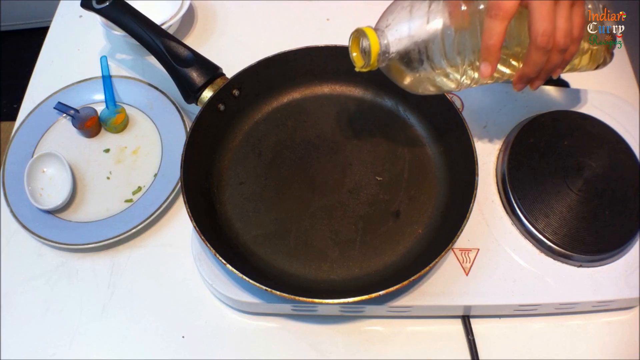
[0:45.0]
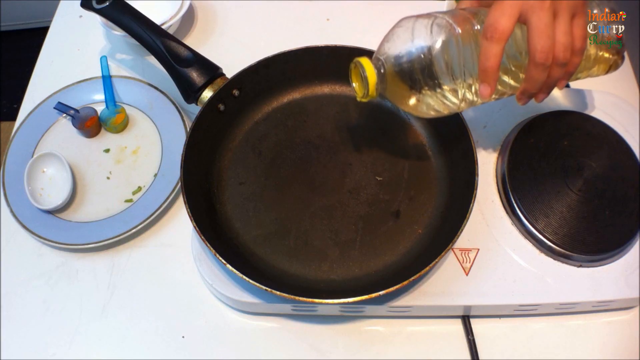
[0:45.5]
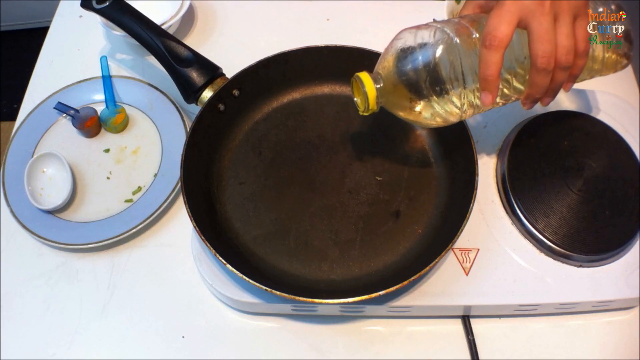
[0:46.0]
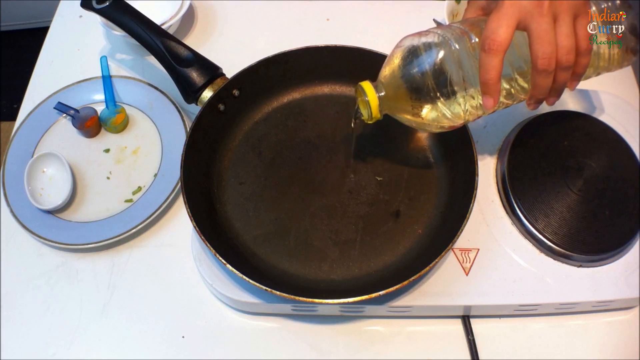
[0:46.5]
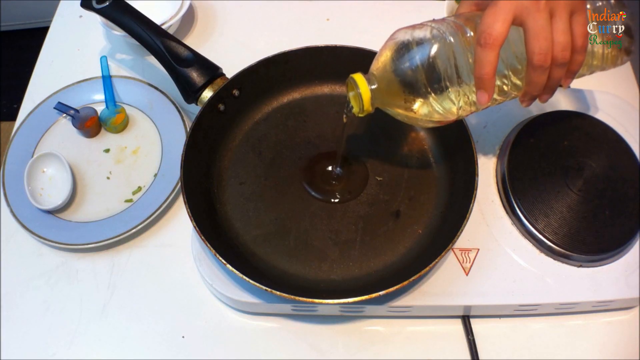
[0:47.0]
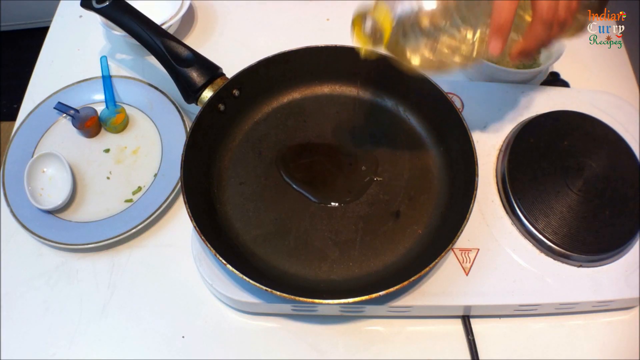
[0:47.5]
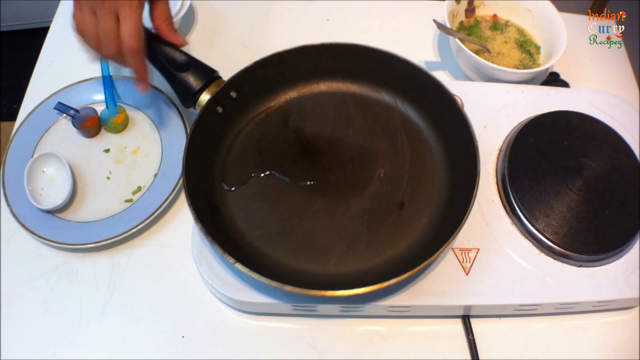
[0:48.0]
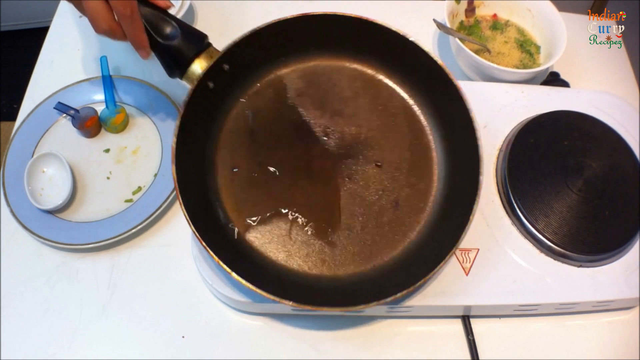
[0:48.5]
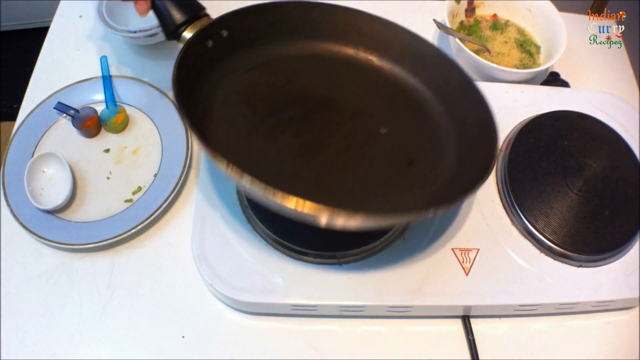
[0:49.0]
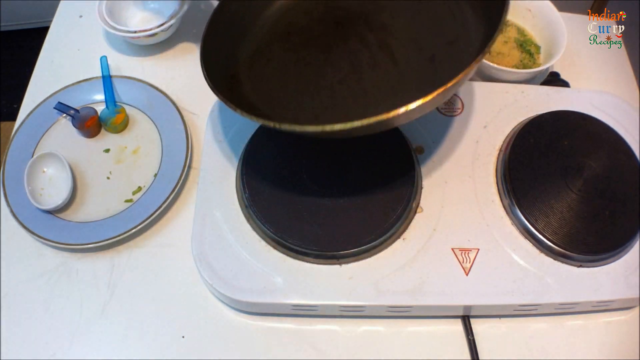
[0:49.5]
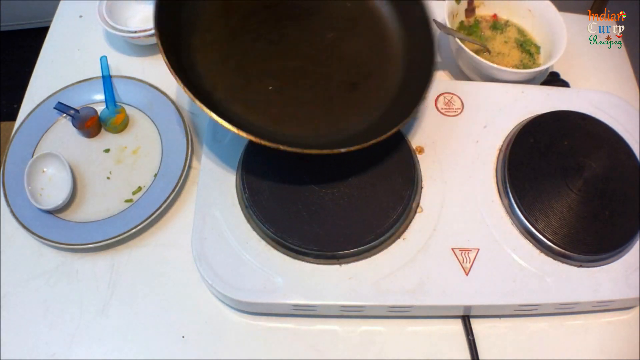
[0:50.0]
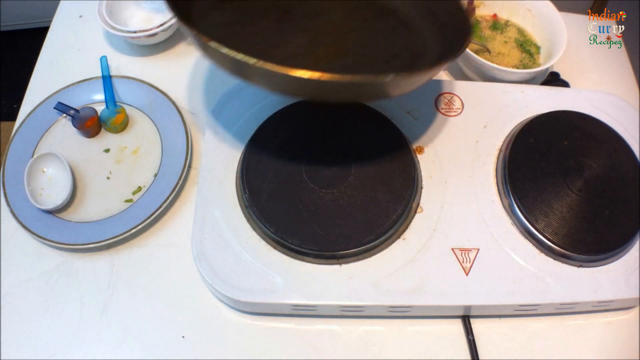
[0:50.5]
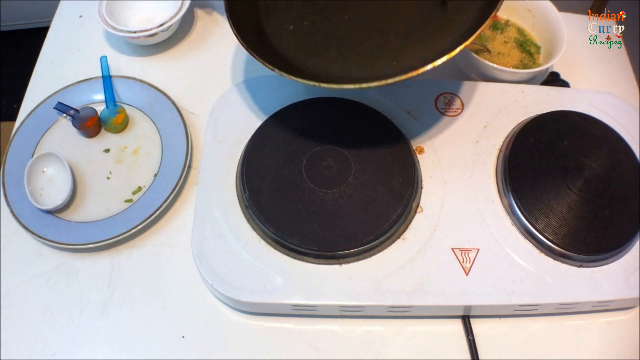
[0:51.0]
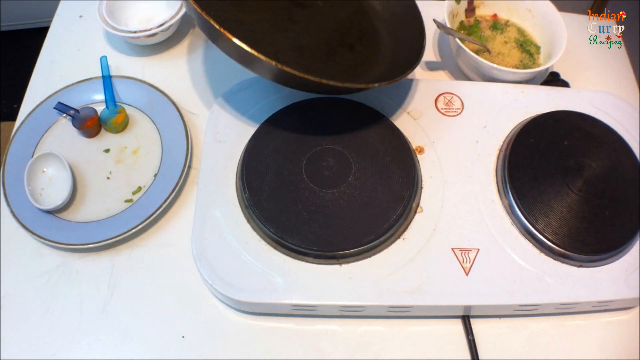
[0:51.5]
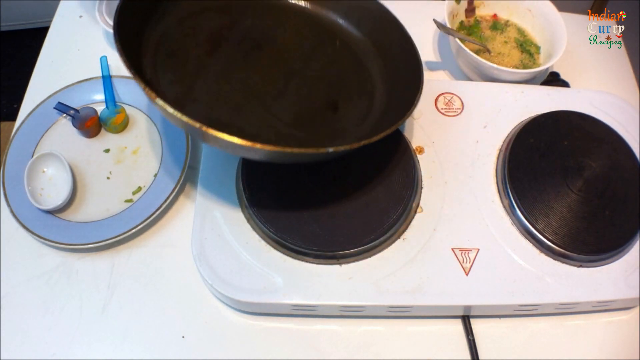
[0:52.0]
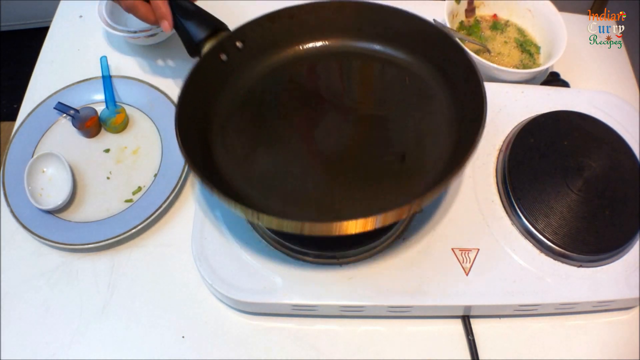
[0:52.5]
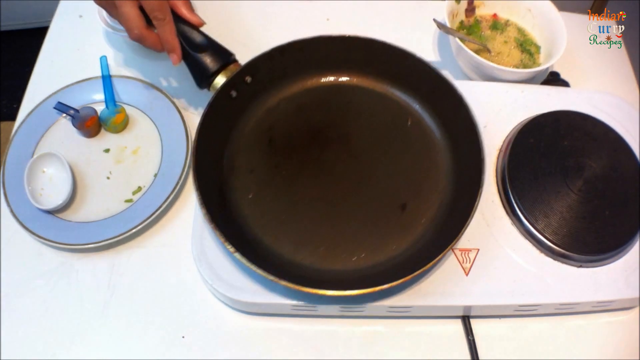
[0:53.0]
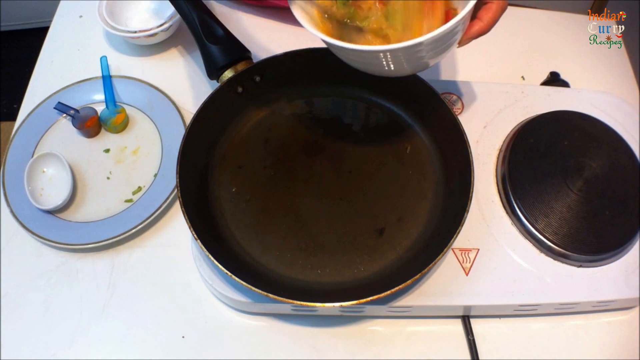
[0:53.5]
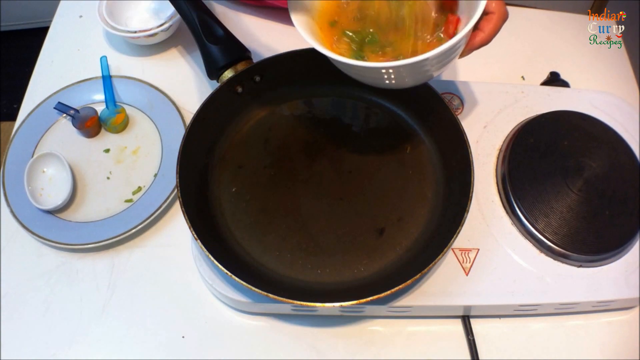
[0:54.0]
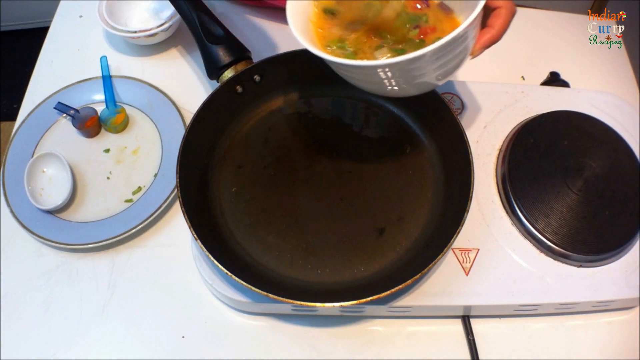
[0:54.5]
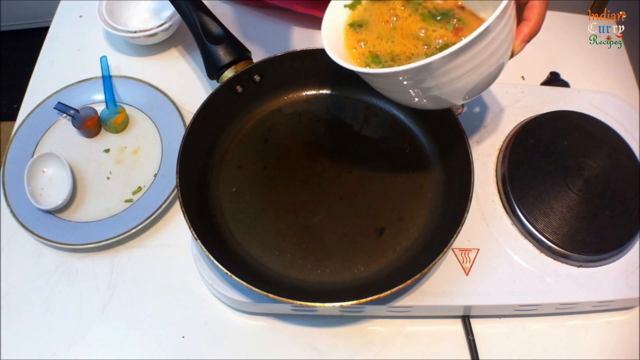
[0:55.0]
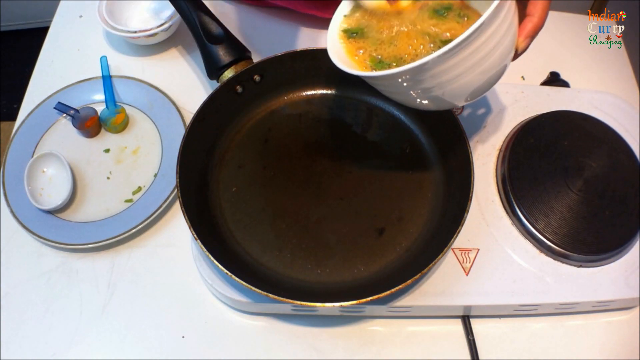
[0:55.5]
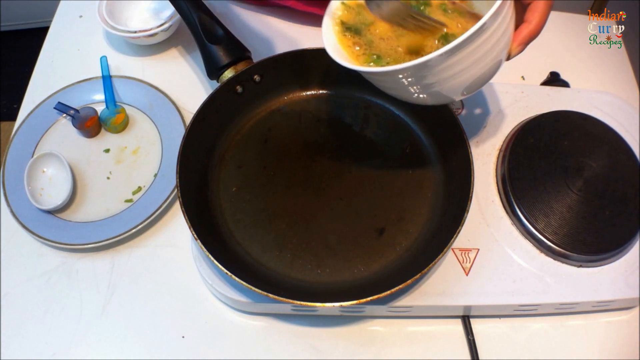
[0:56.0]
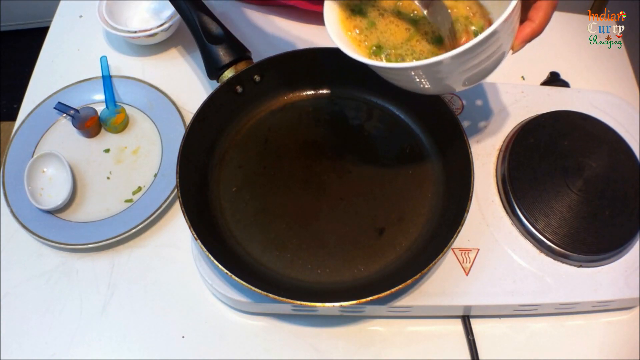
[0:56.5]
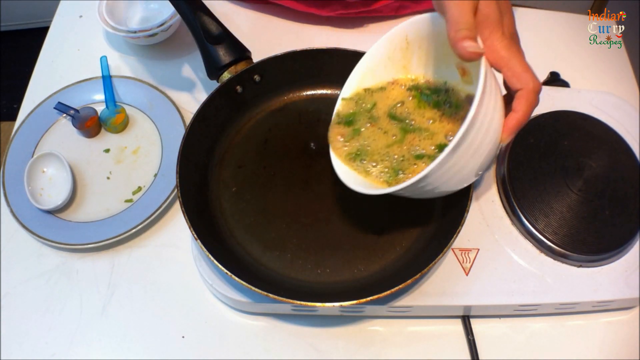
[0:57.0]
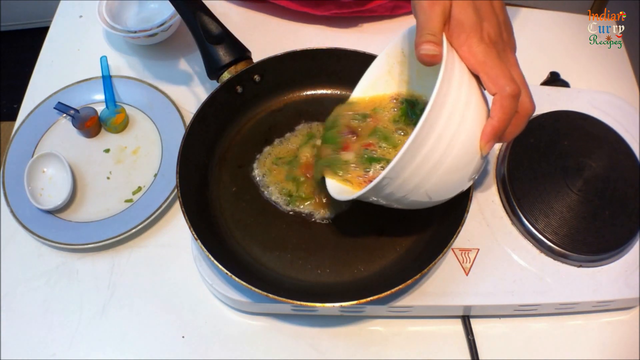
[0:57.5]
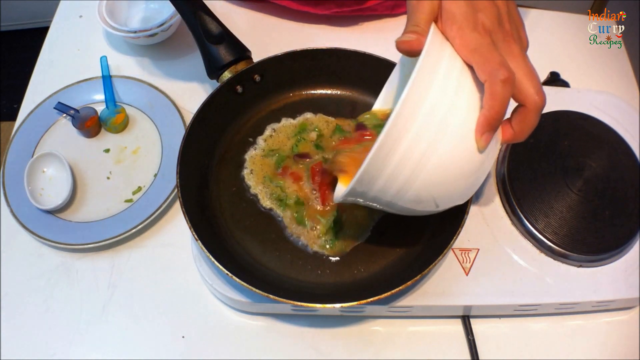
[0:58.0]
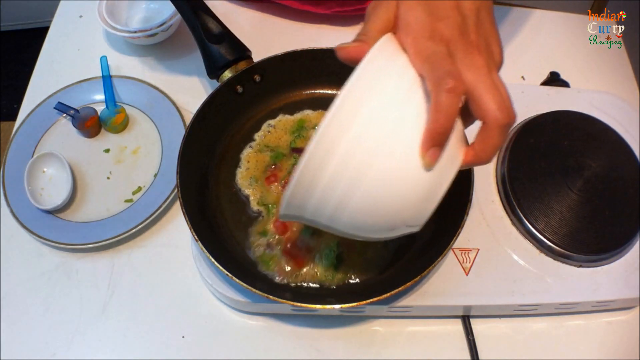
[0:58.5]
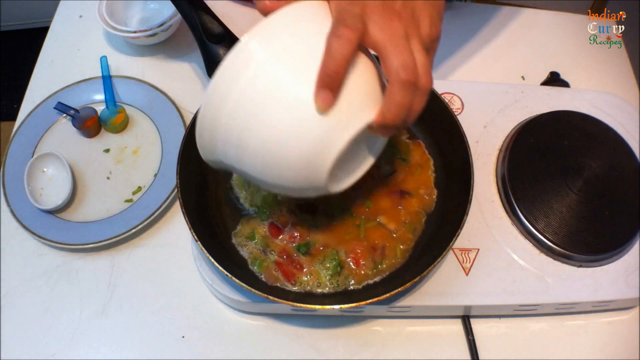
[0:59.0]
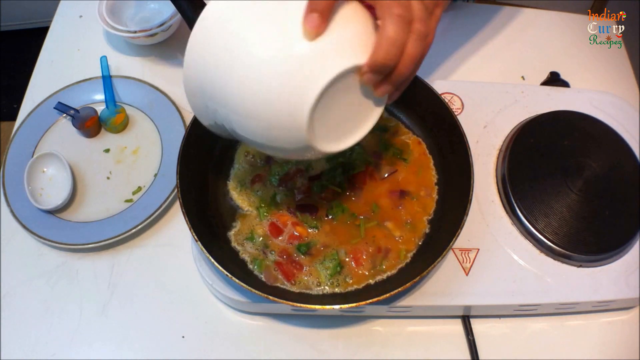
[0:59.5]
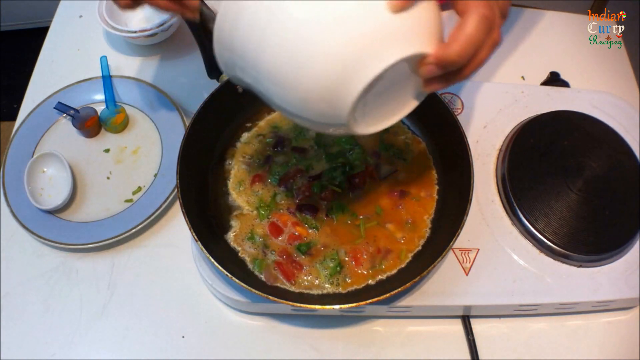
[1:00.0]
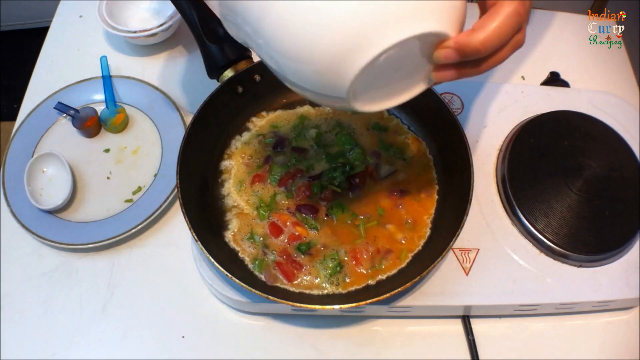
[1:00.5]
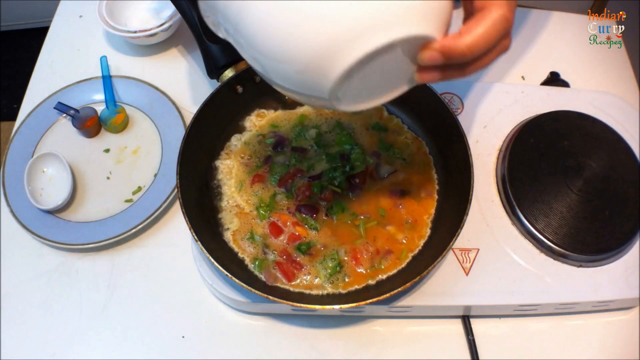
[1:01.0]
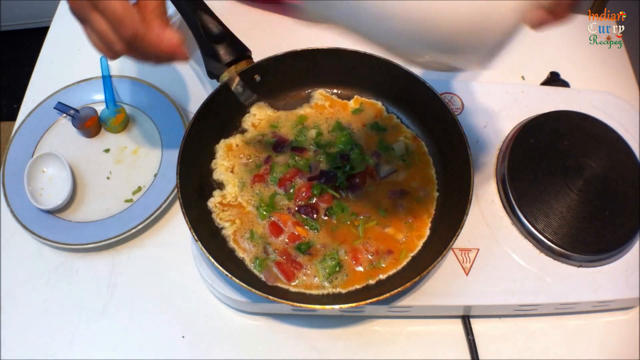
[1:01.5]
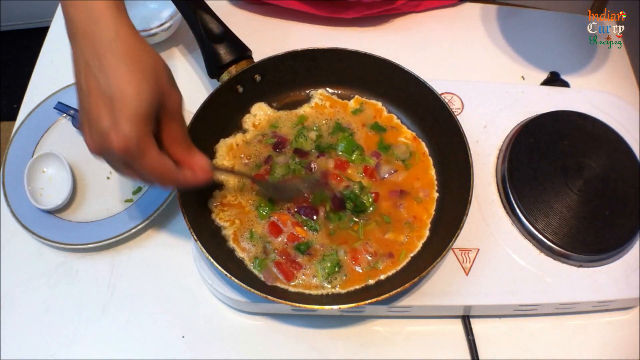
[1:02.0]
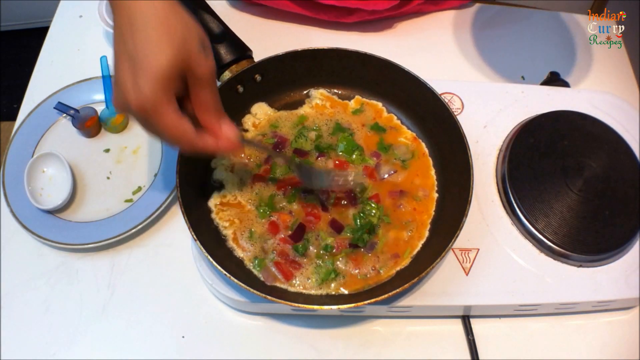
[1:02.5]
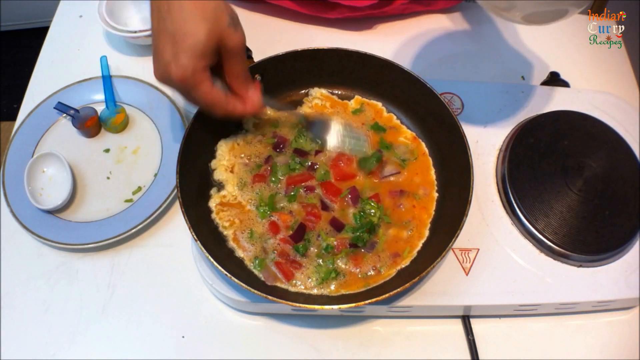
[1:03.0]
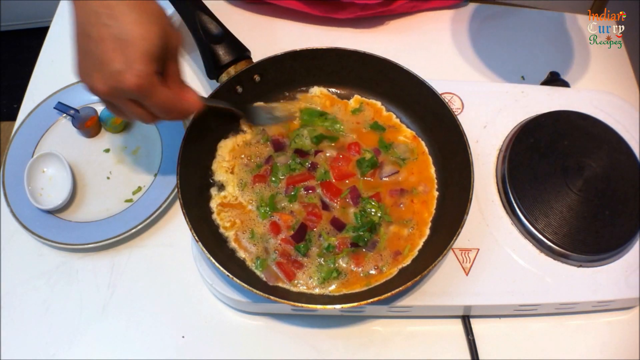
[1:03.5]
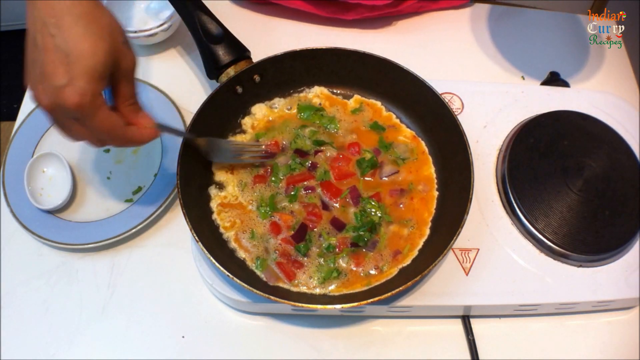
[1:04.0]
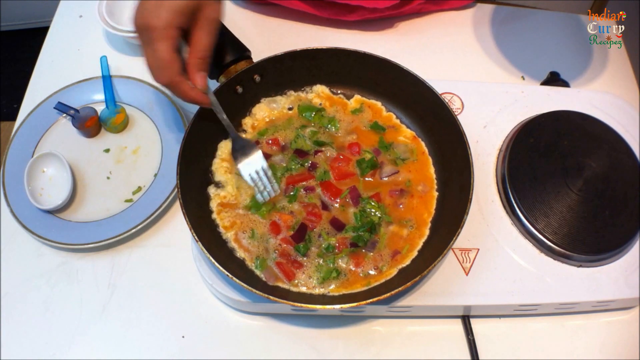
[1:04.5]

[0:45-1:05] Oil in a plastic container is poured into a black pan on a portable cooking stove. The stove is on a white table, with a small plate with blue outlining and a white center on the left side and some bowls behind the stove. One of the bowls, containing lots of ingredients and eggs, is then poured into the pan. The ingredients are pushed around with a fork a little, and the egg starts to cook immediately, taking on a different texture as everything cooks in the pan. The hands holding the fork and the plastic bottle are brown, and the bowls in the back are all white.